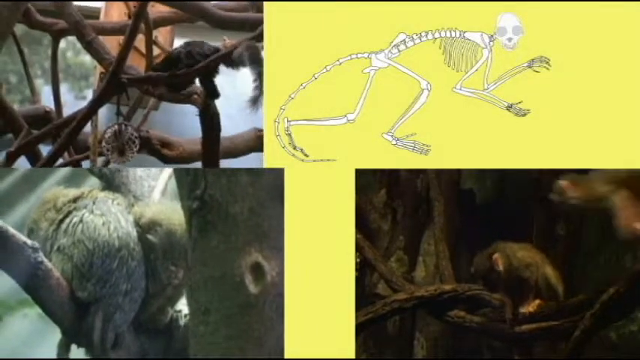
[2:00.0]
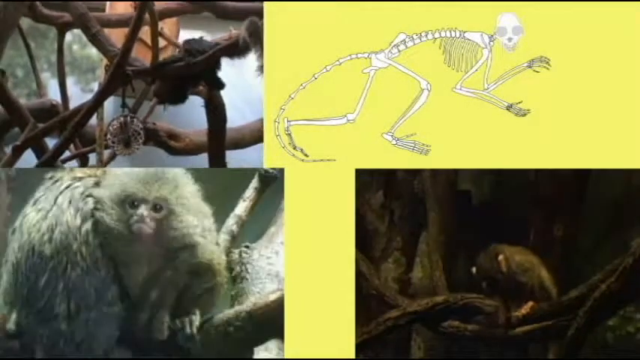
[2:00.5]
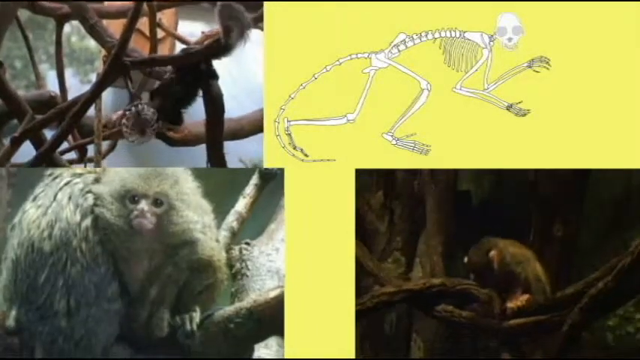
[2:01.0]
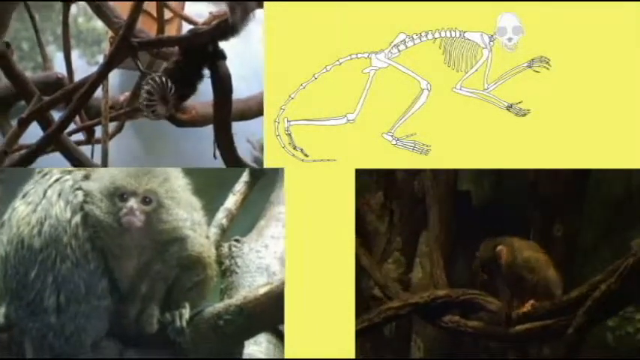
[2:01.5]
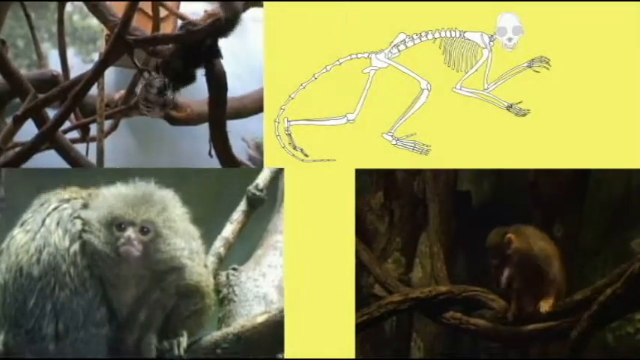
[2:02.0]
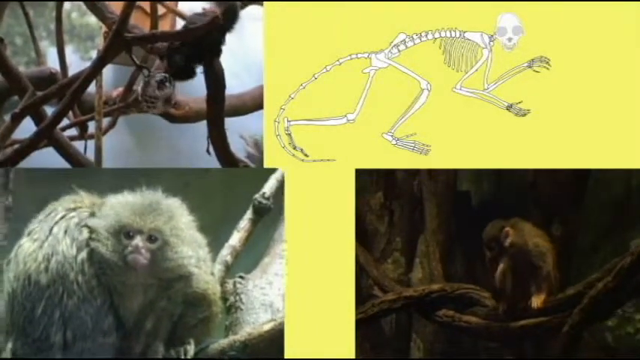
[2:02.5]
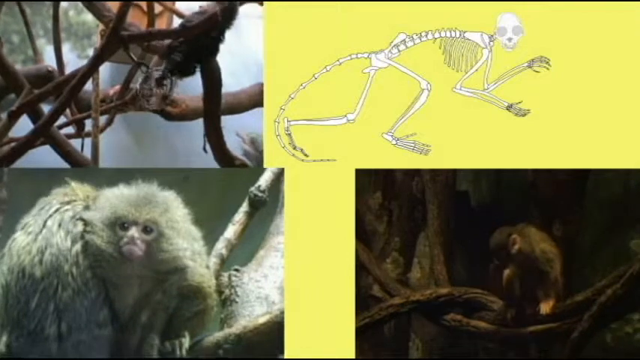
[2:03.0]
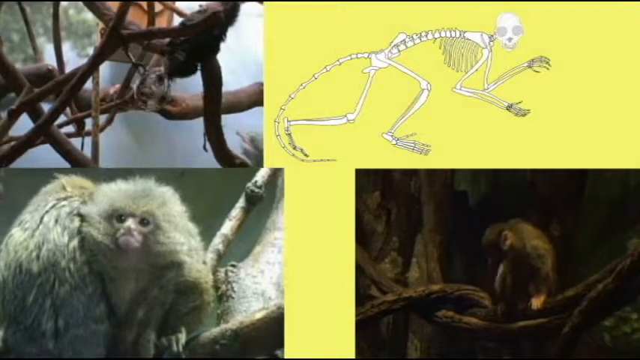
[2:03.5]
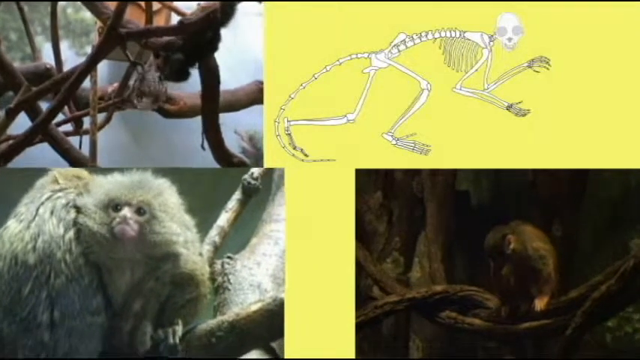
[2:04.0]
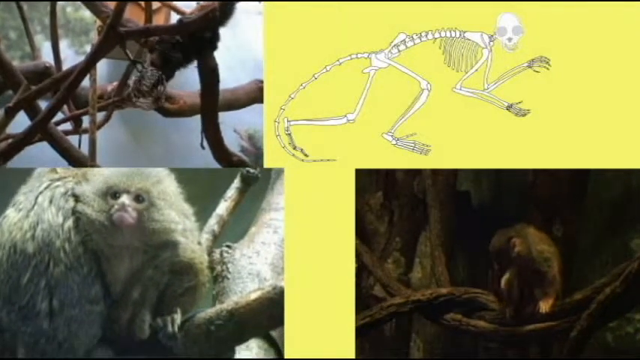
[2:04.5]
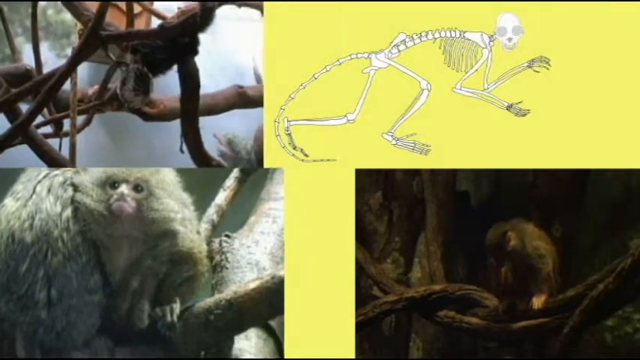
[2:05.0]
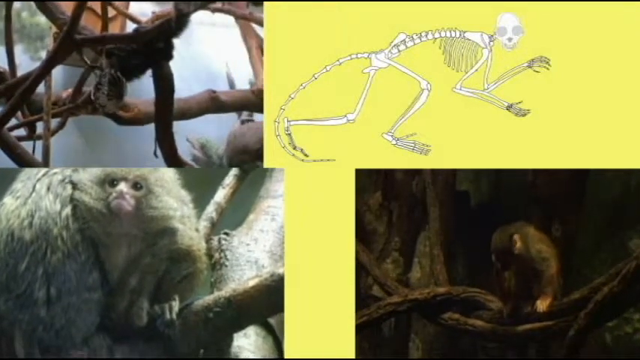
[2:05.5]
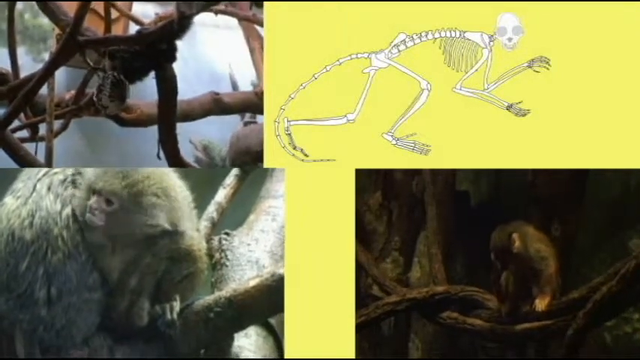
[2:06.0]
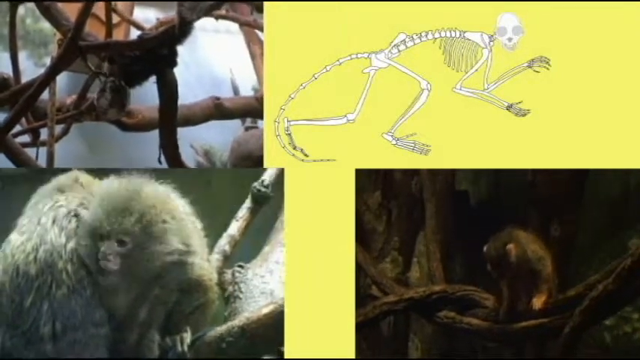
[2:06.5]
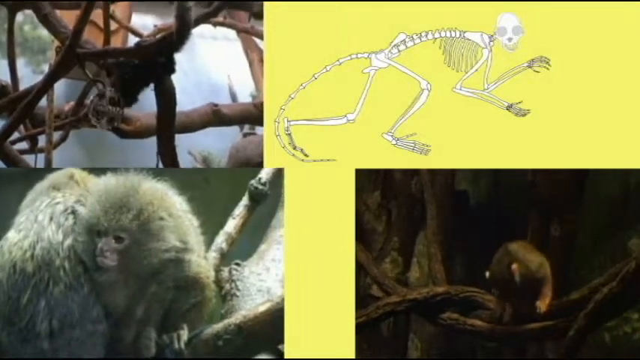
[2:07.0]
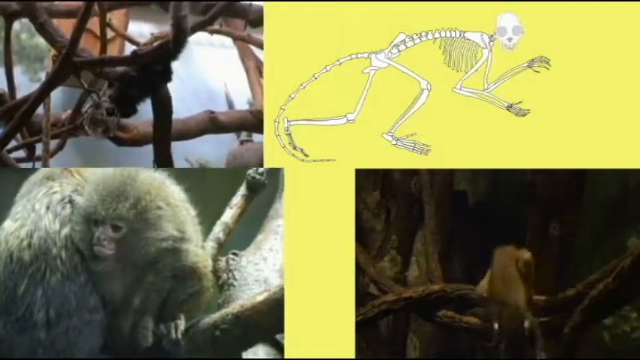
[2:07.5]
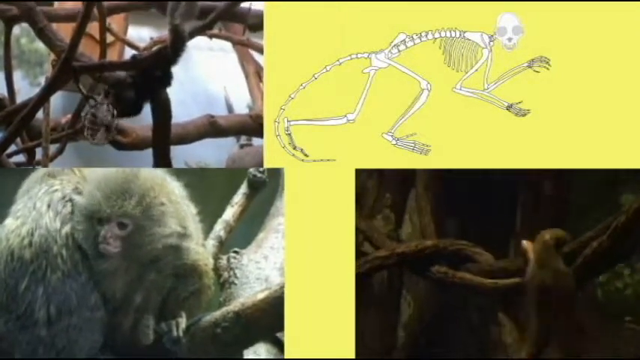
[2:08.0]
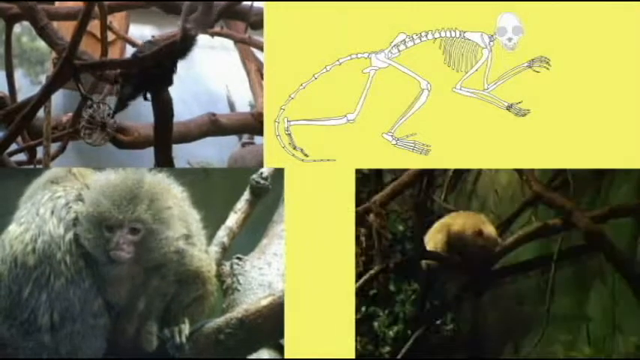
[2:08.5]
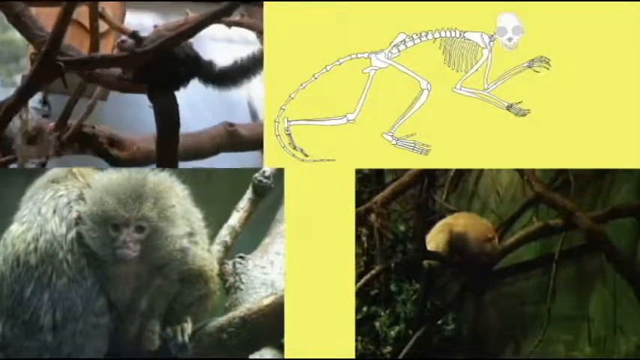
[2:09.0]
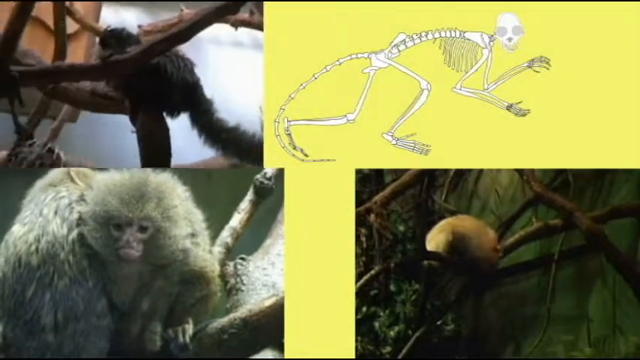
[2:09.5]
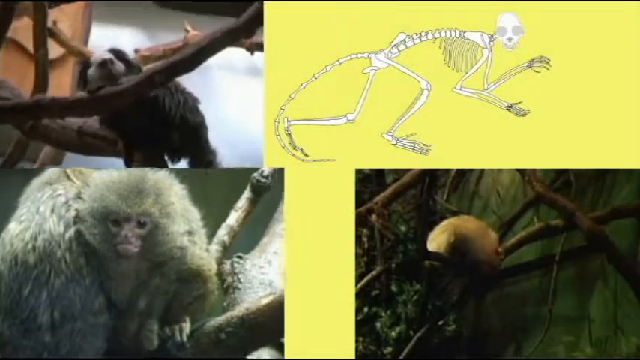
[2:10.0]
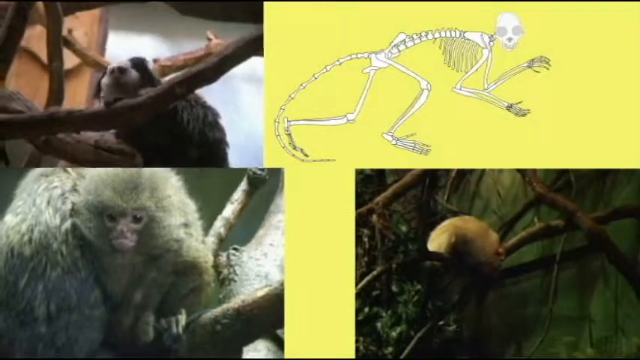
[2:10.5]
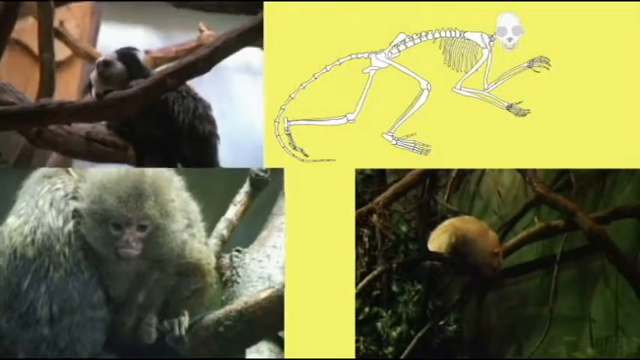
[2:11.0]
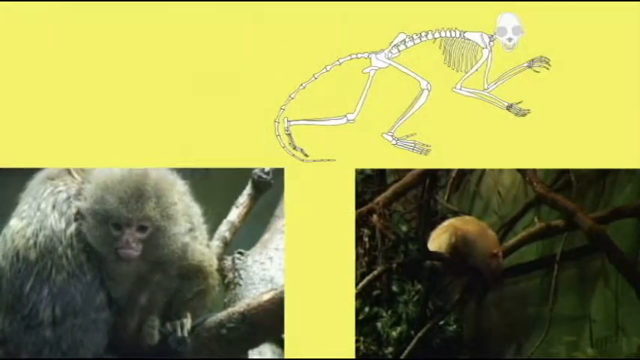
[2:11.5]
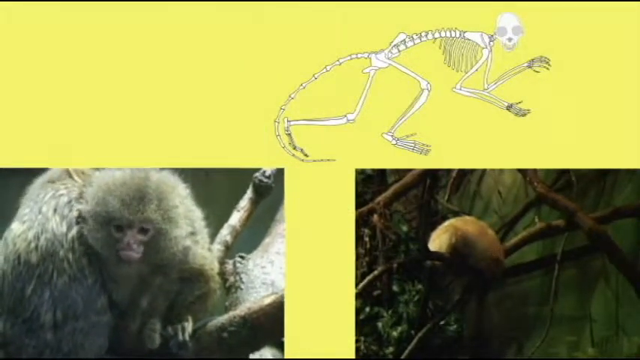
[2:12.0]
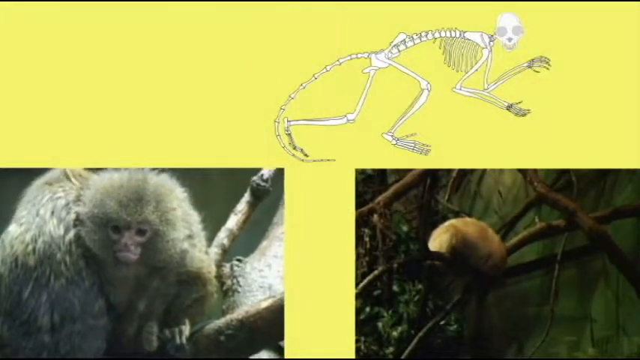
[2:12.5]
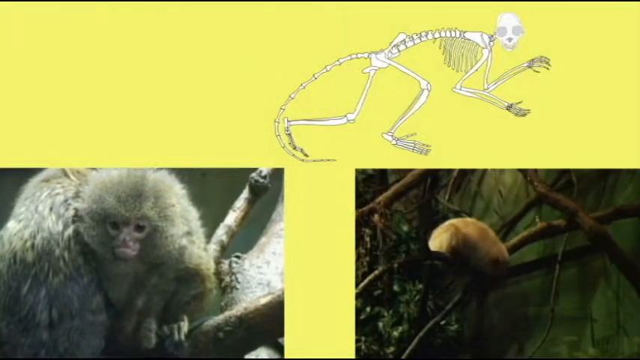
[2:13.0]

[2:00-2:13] Three videos of monkeys are scattered across the screen, two on the left side and one at the bottom right. At the top right is the image of the monkey's skeletal body, which now stays static in place with the yellow background behind it. The monkeys keep moving around in their clips, showing their movement and flexibility. At the end, the video on the top left quickly disappears.